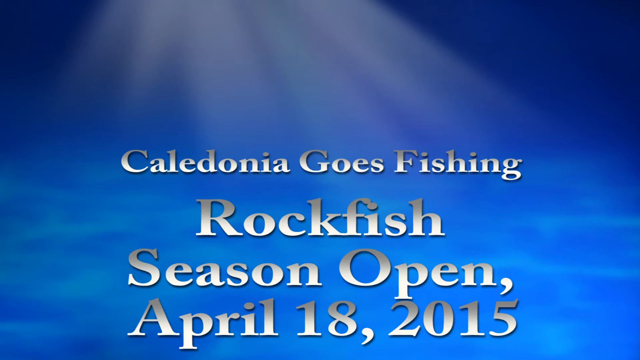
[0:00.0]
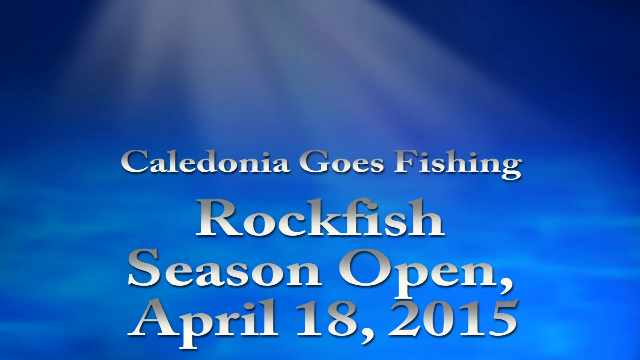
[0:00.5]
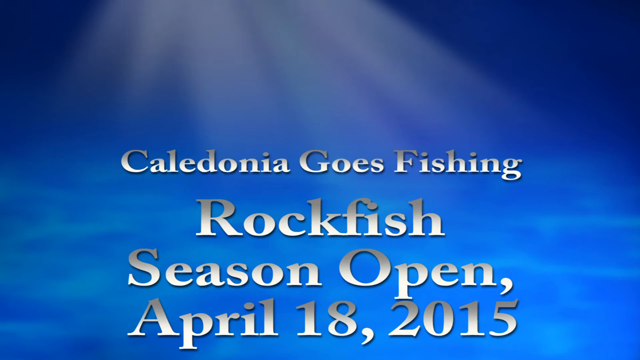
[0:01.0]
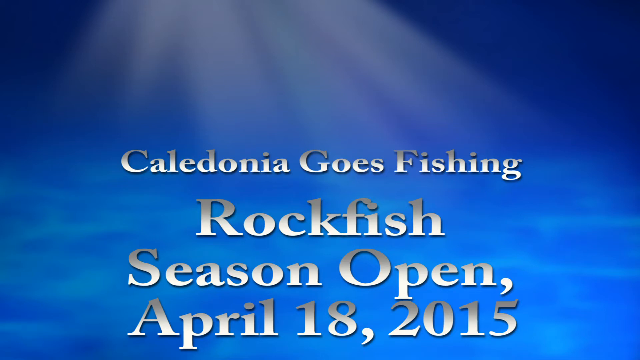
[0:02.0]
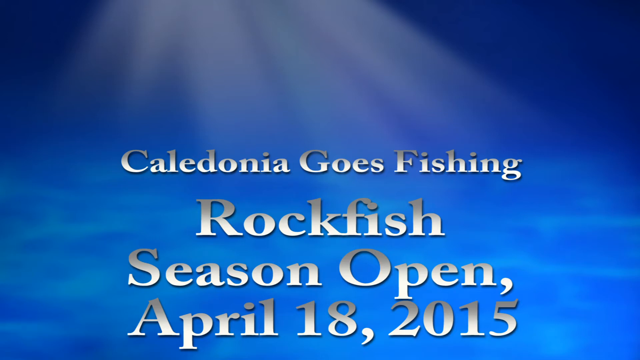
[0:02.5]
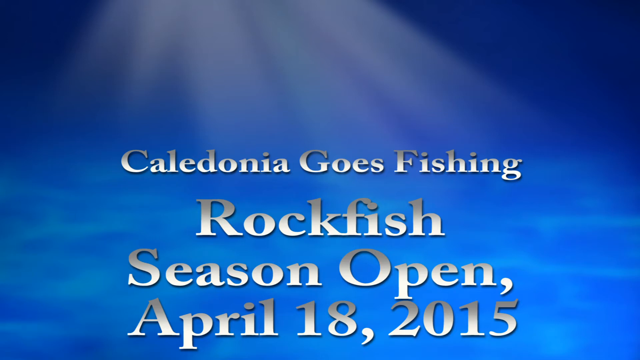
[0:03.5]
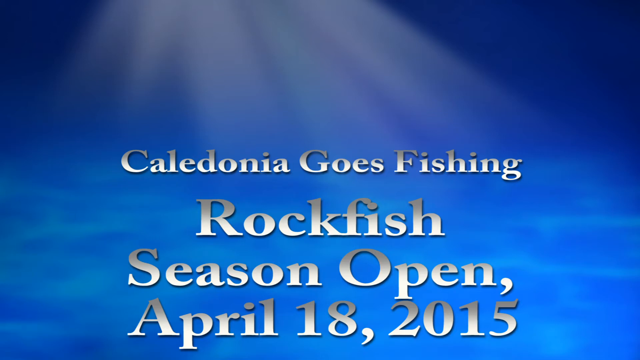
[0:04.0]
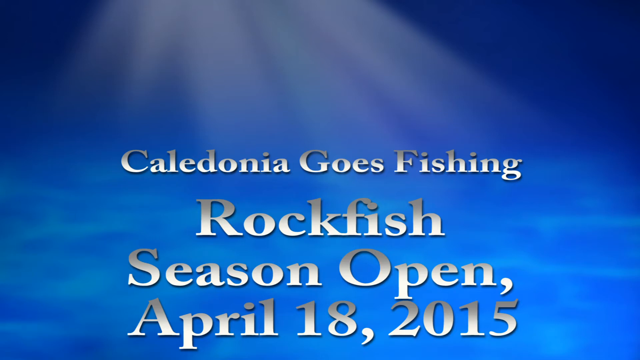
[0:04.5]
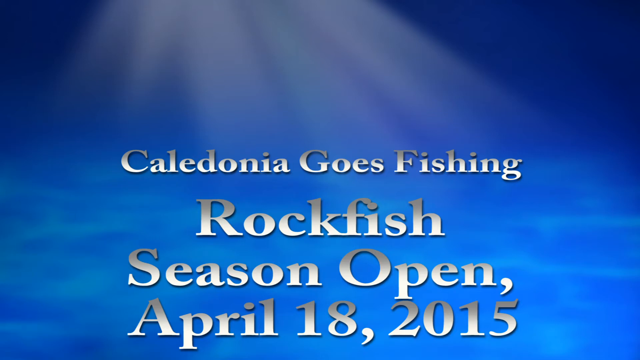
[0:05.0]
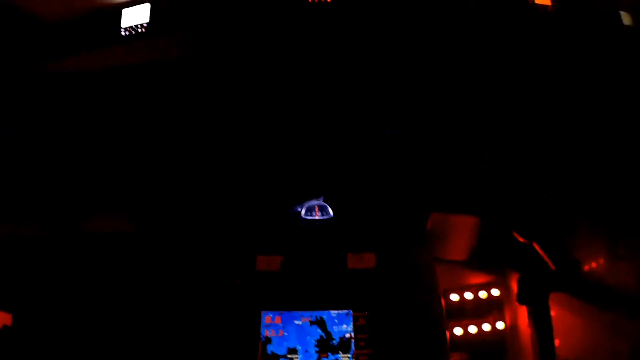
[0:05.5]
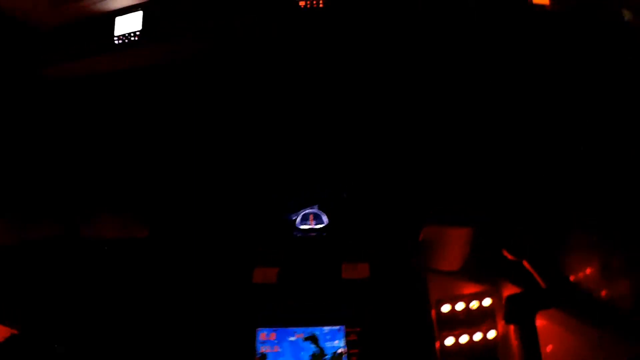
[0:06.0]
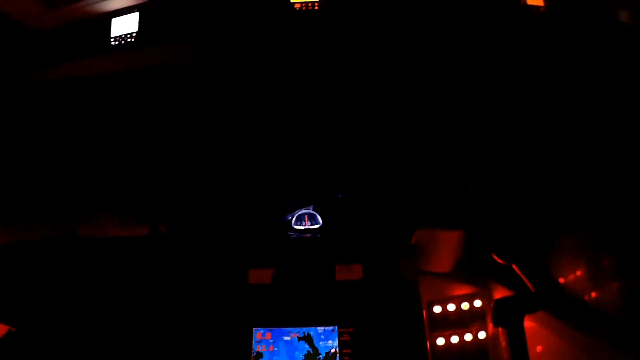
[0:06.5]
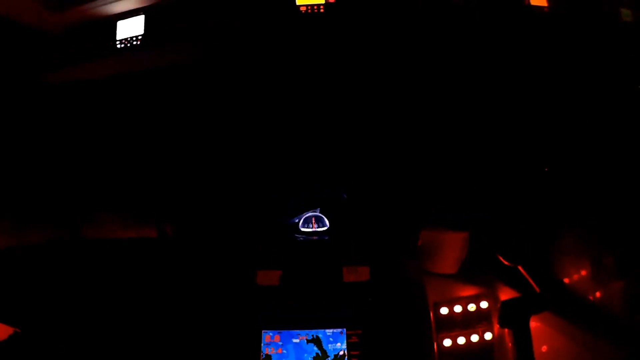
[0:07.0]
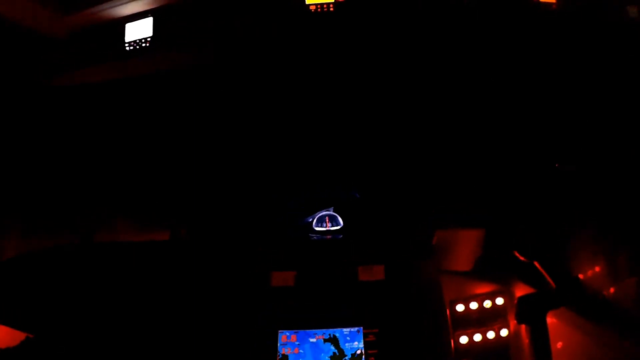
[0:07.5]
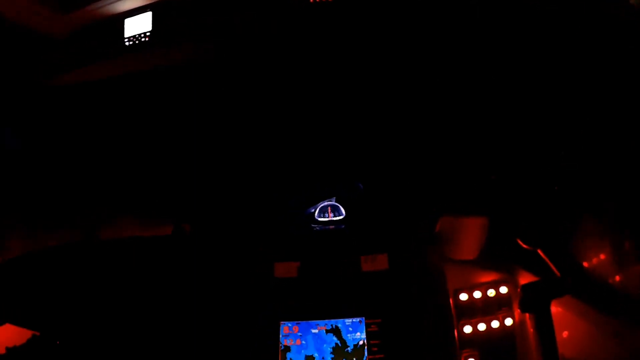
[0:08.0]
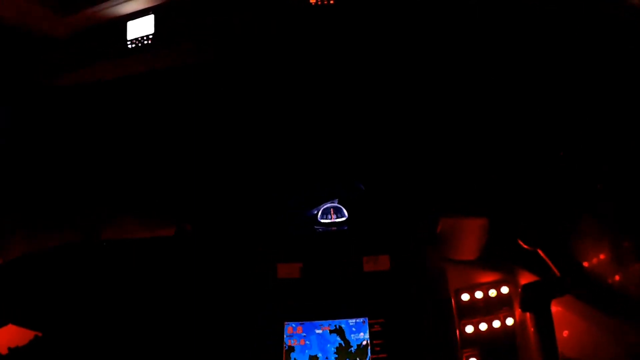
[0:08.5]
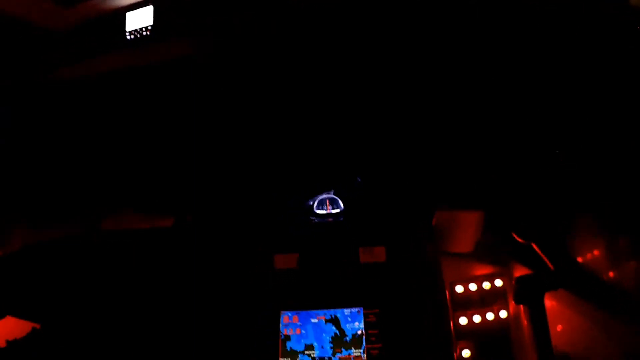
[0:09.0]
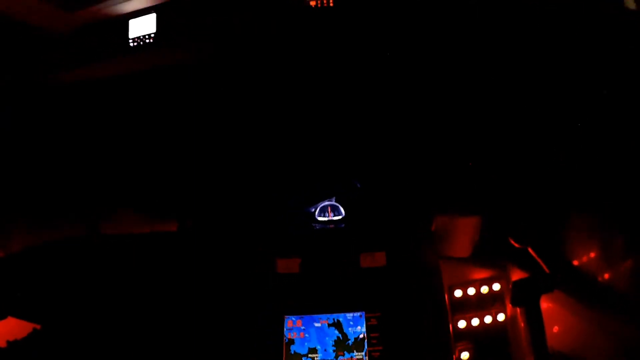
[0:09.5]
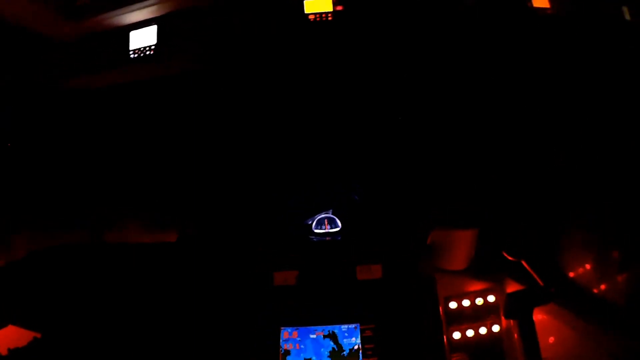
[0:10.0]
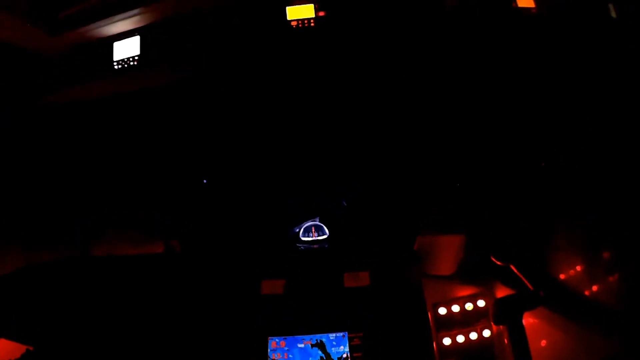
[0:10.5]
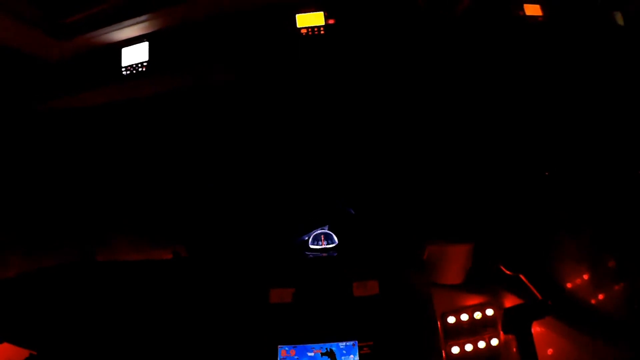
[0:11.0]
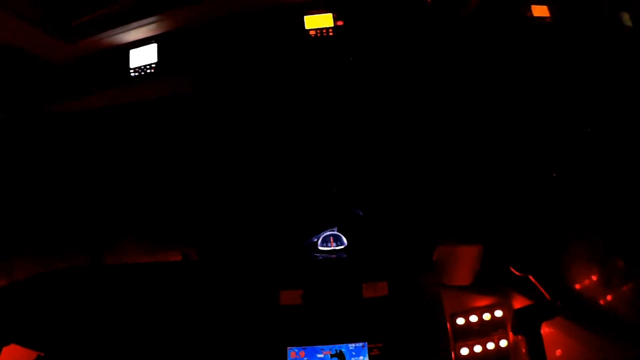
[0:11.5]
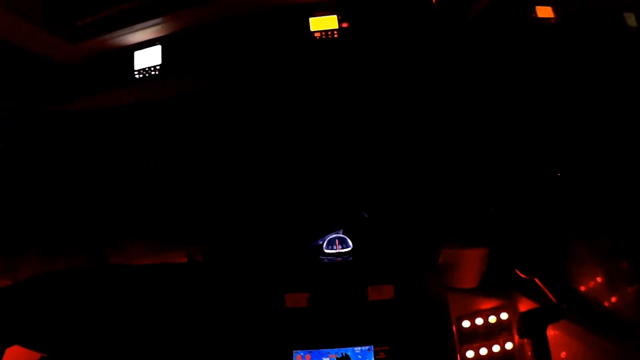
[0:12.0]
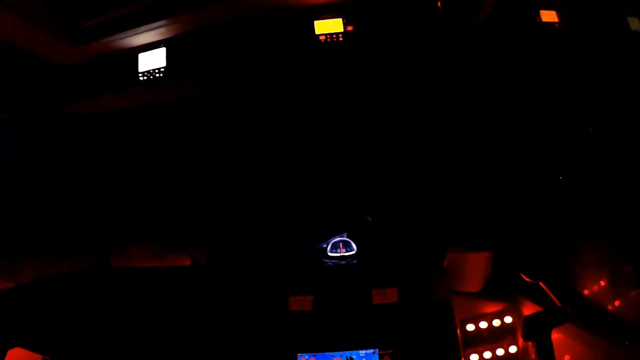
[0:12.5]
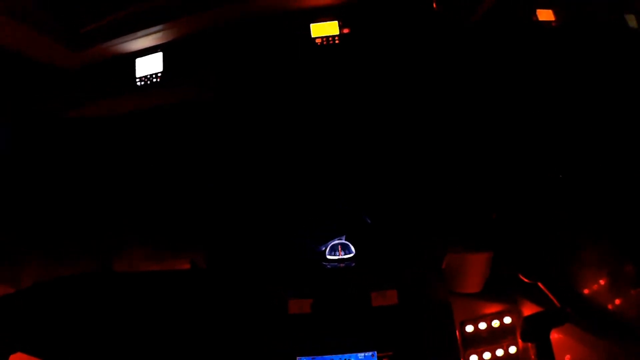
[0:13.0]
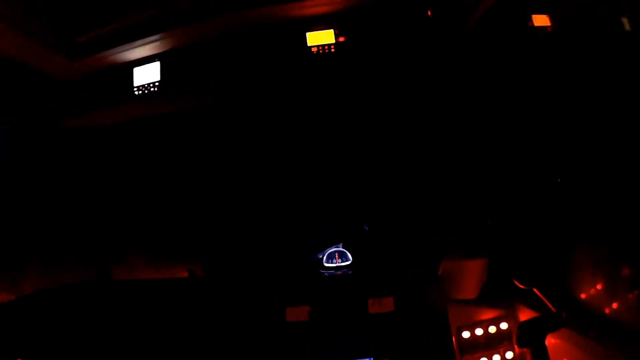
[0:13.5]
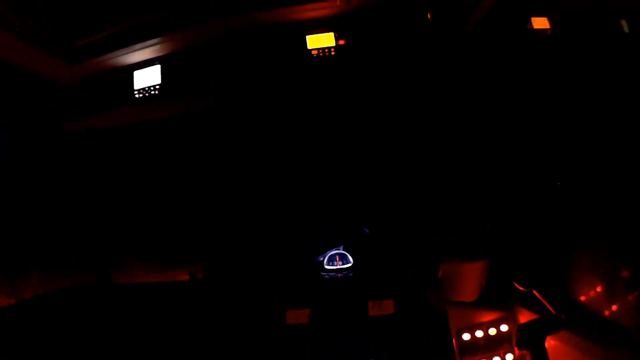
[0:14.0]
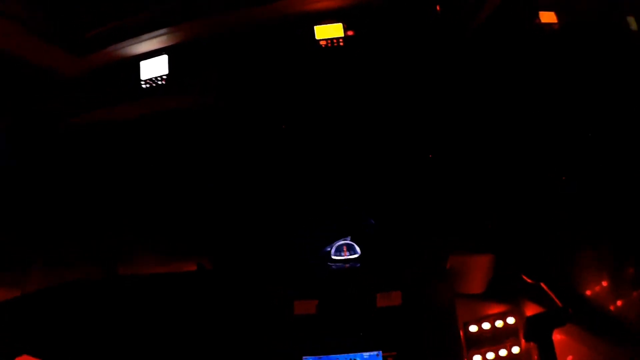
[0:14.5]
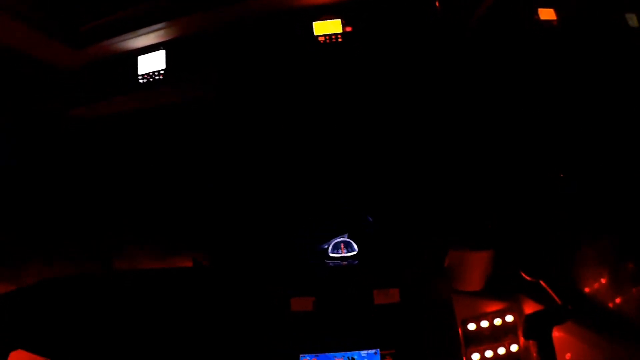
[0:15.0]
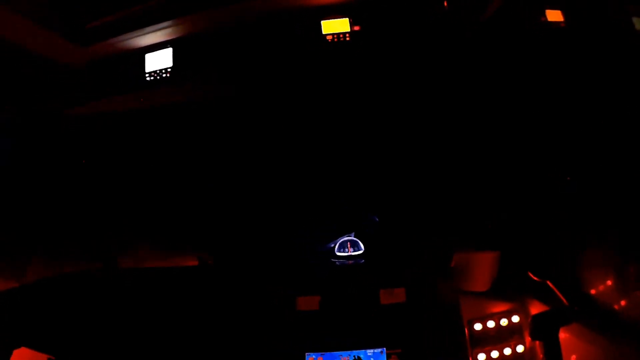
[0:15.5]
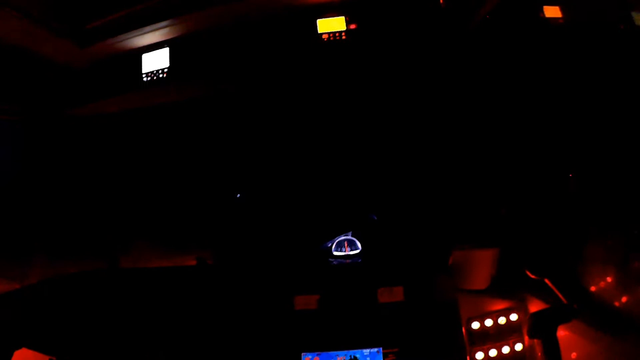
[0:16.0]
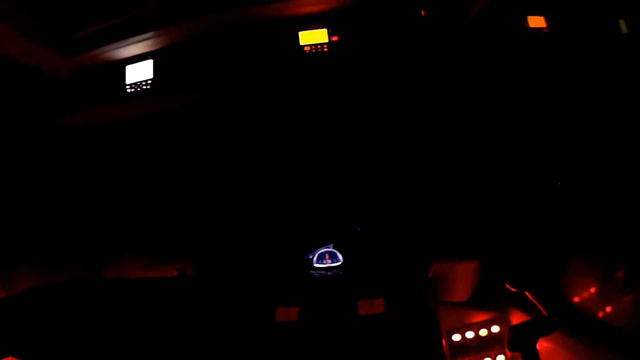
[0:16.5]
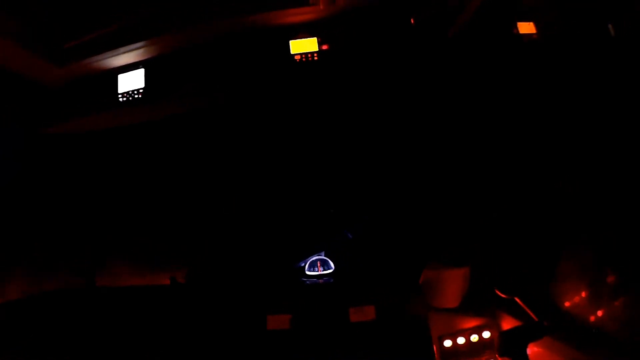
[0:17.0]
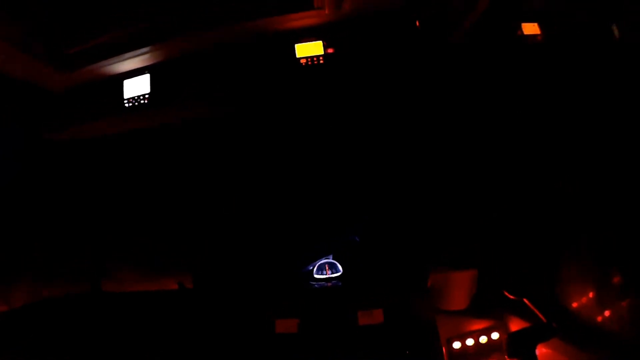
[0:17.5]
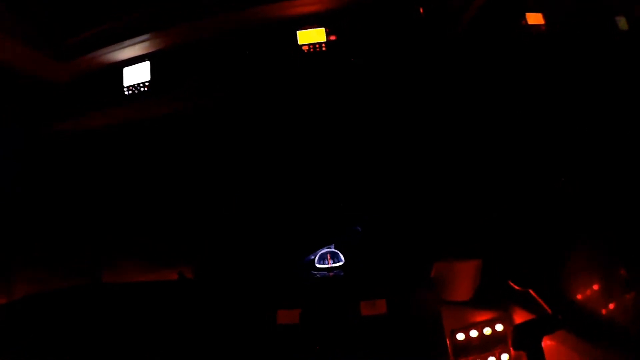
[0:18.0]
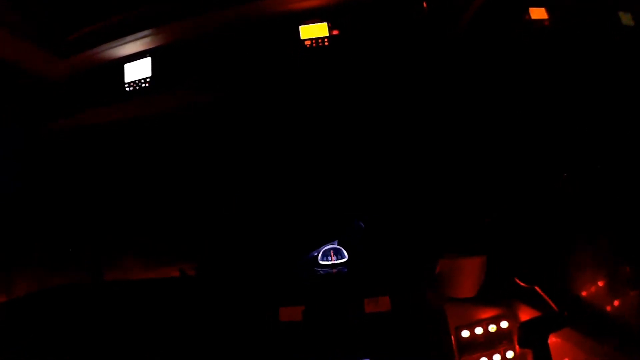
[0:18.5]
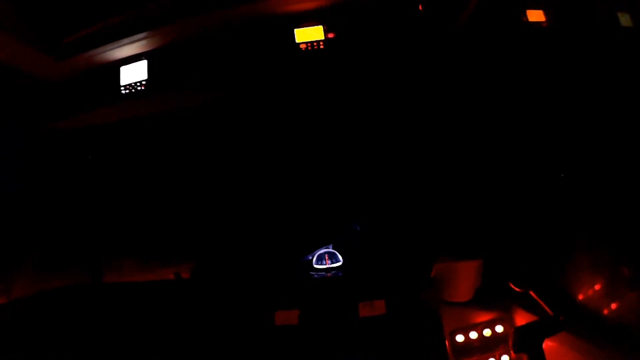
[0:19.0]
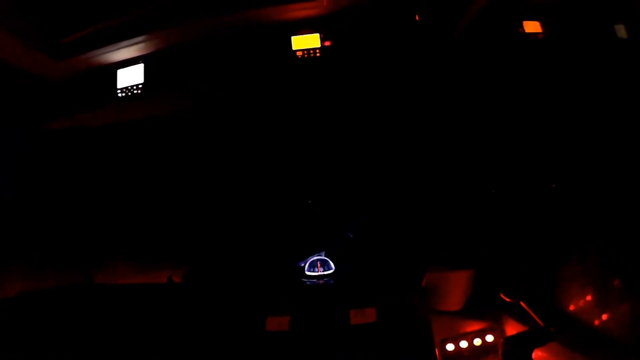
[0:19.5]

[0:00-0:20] The video opens on a background with a light source coming down from the top, while words scroll across the screen: "Caledonia goes fishing. Rockfish season open April 18, 2015." The next screen is very dark and hard to make out. Along the top are what look like screens: a white one on the left, a yellow one in the middle, and a red one on the right. Some type of glowing thing is at the middle bottom of the screen, and at the very bottom right are what look like two rows of small, glowing white dots that almost look like light bulbs. Another screen with different colors on it is at the very bottom, but it is hard to tell exactly what the shot shows.